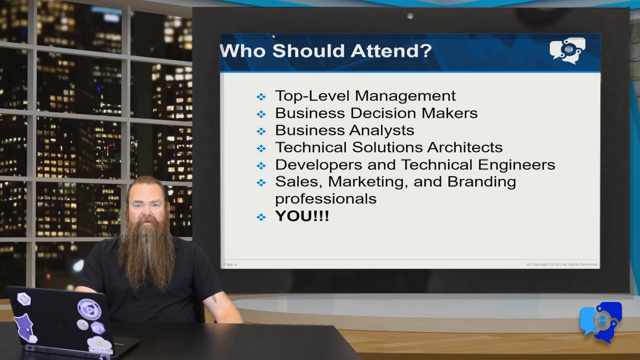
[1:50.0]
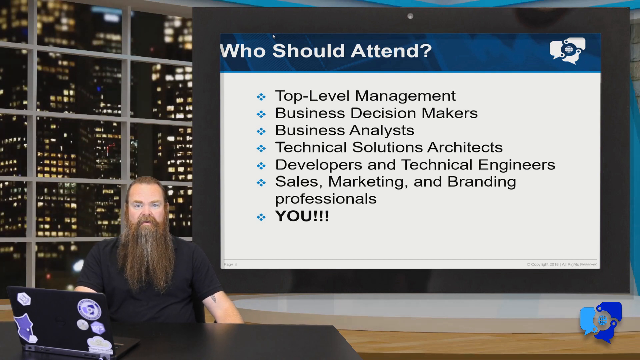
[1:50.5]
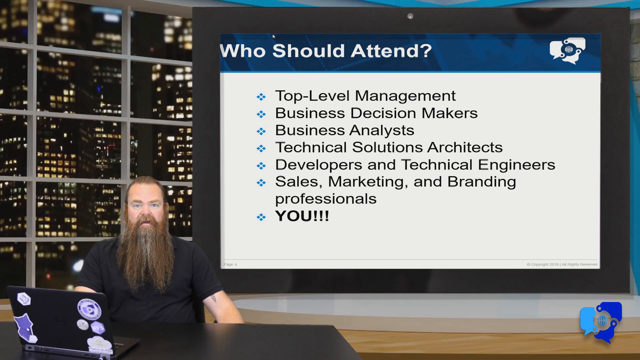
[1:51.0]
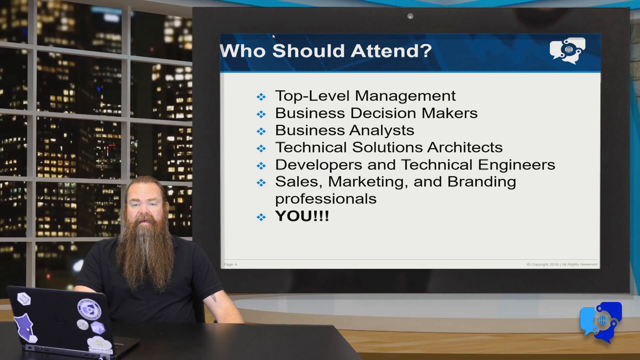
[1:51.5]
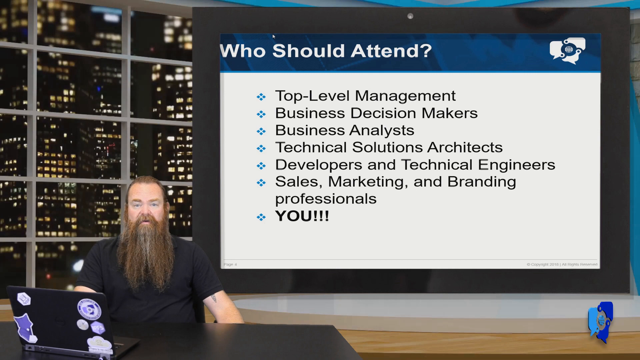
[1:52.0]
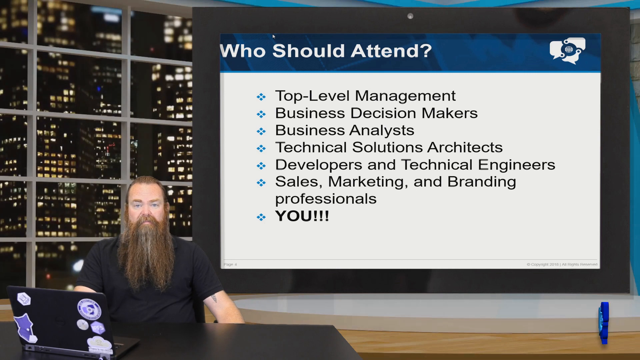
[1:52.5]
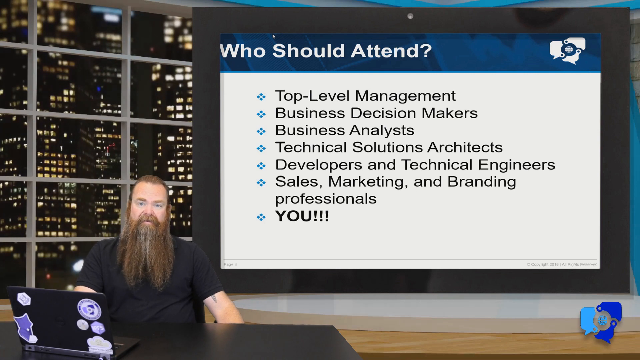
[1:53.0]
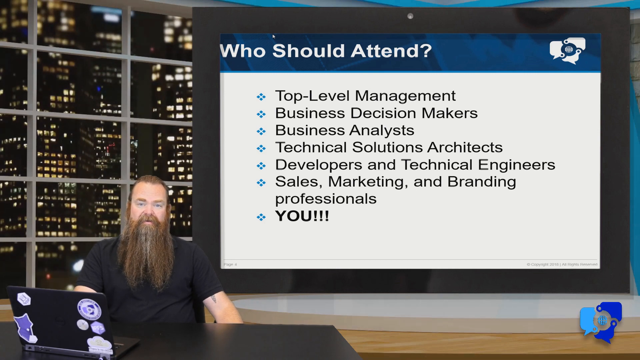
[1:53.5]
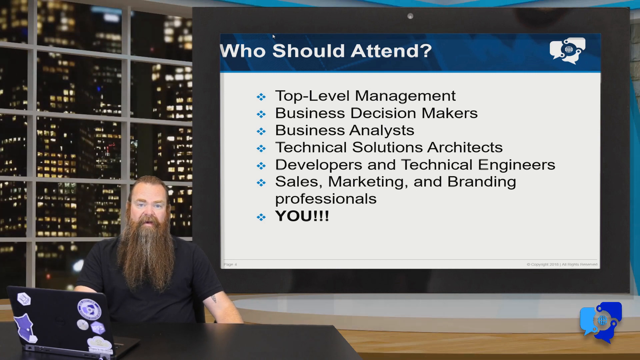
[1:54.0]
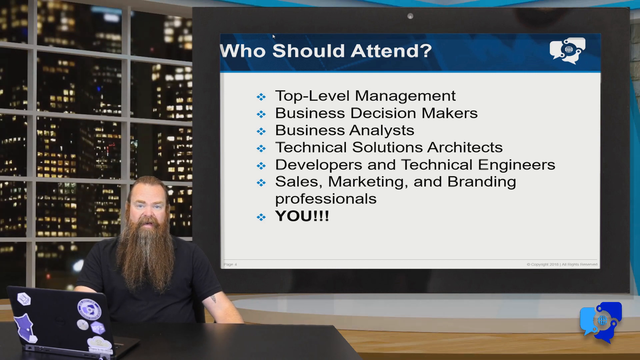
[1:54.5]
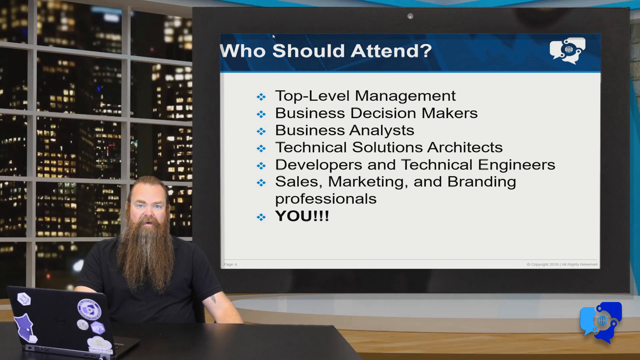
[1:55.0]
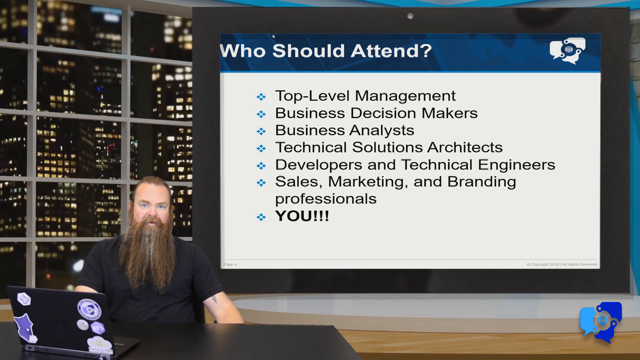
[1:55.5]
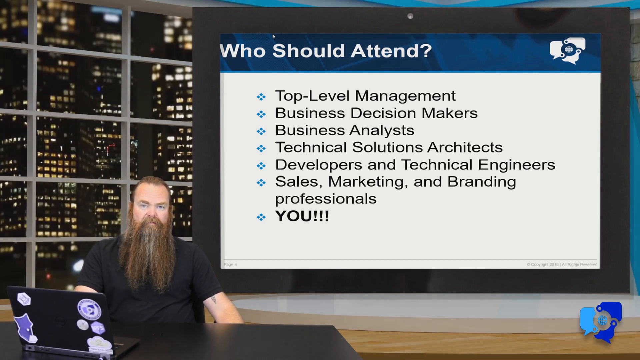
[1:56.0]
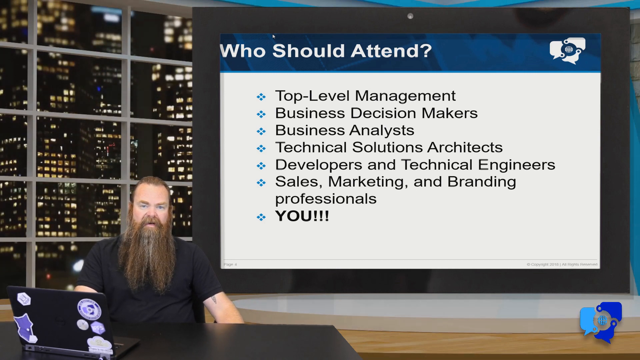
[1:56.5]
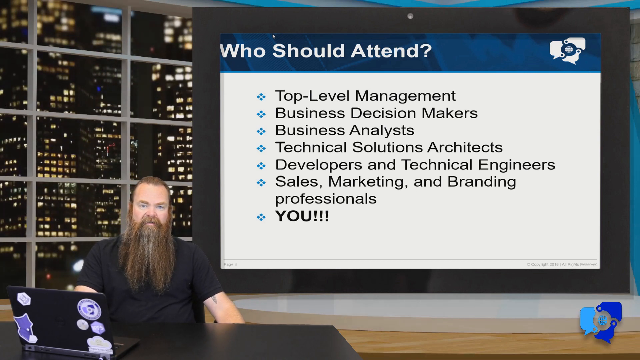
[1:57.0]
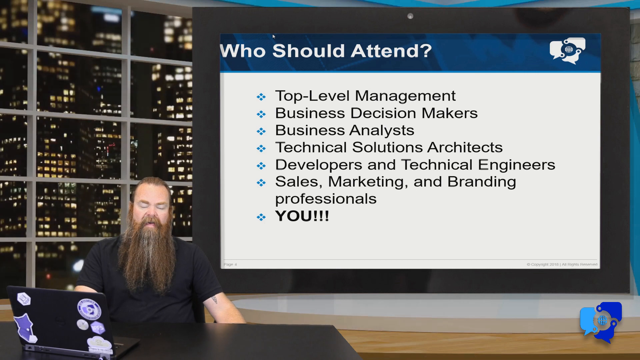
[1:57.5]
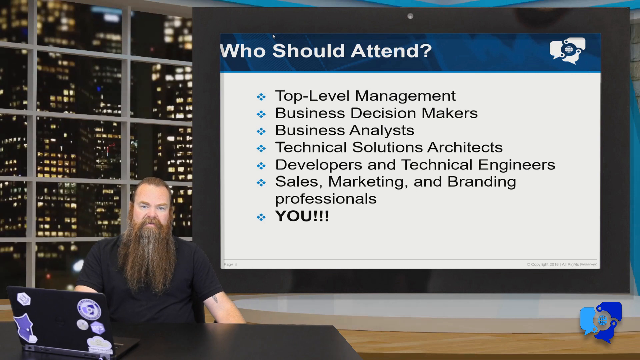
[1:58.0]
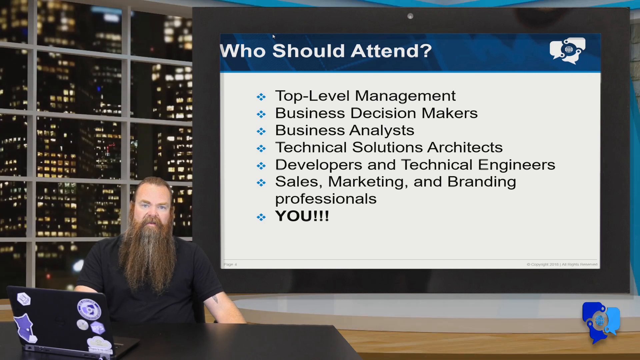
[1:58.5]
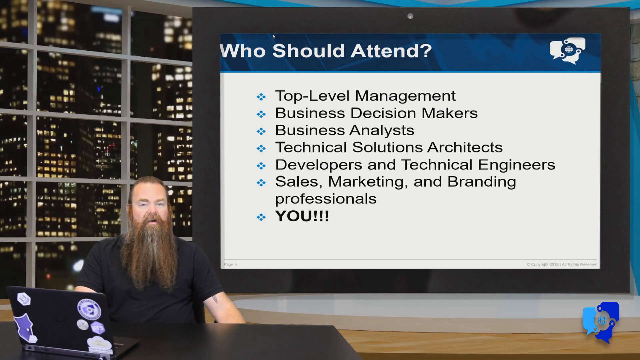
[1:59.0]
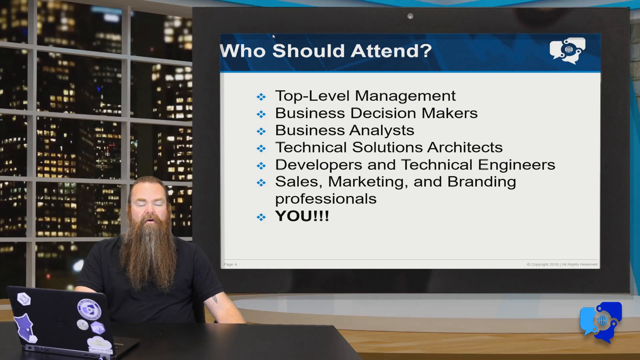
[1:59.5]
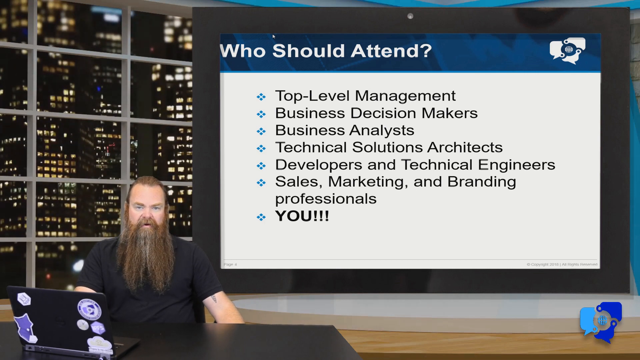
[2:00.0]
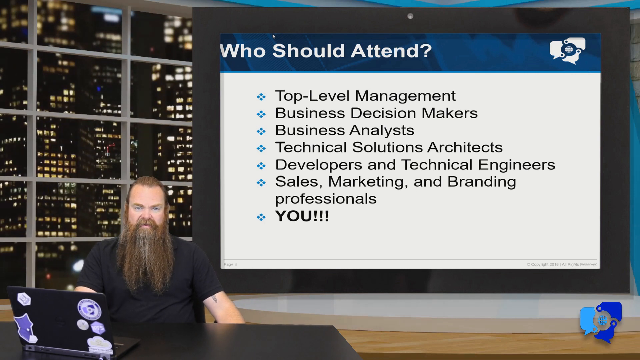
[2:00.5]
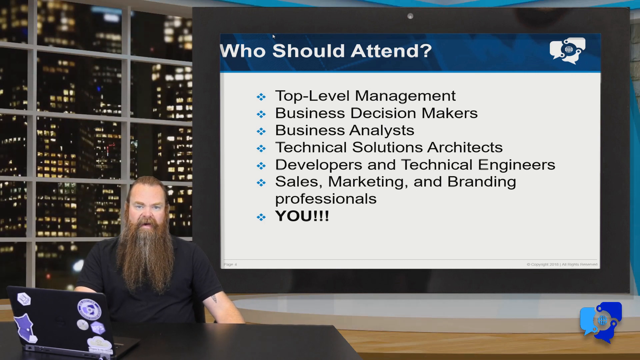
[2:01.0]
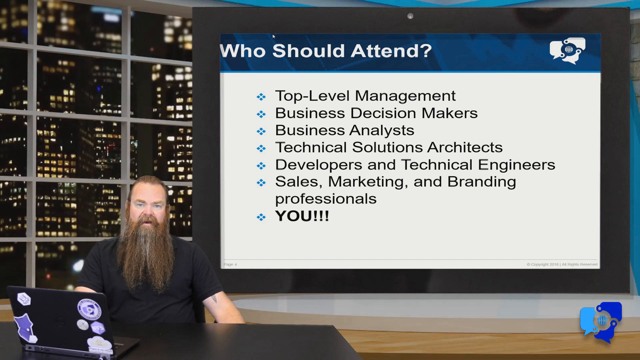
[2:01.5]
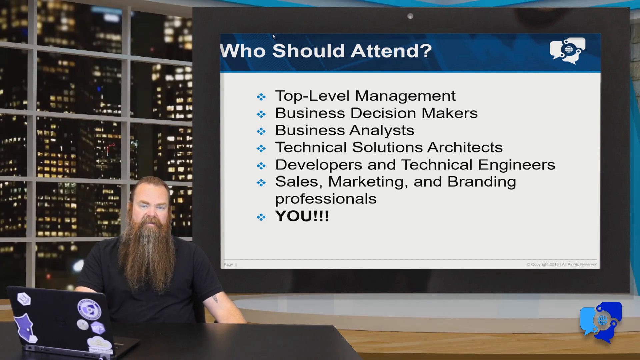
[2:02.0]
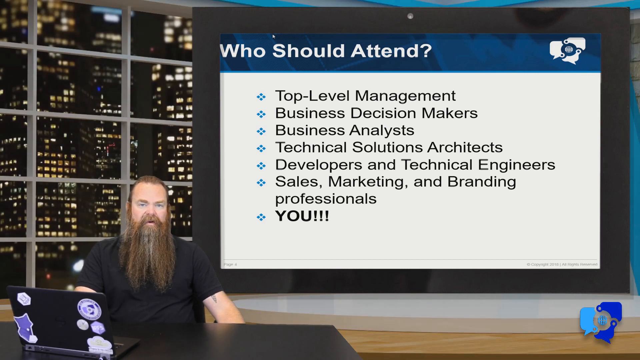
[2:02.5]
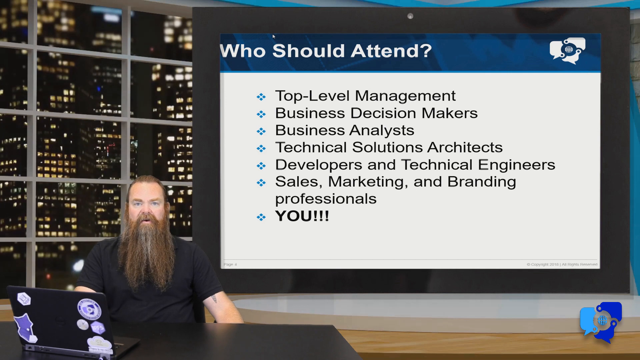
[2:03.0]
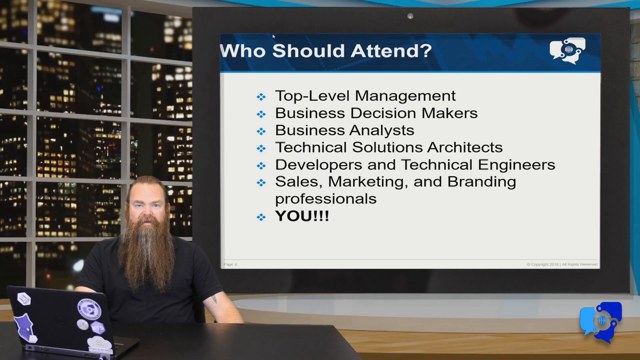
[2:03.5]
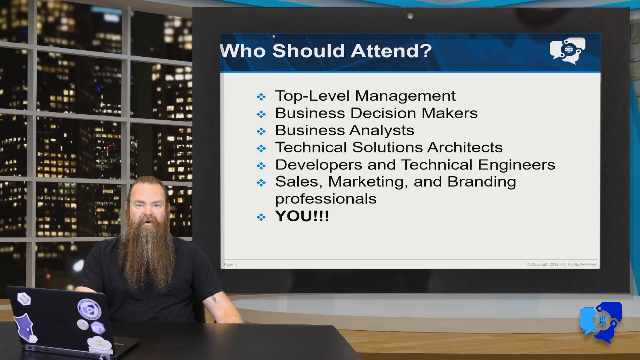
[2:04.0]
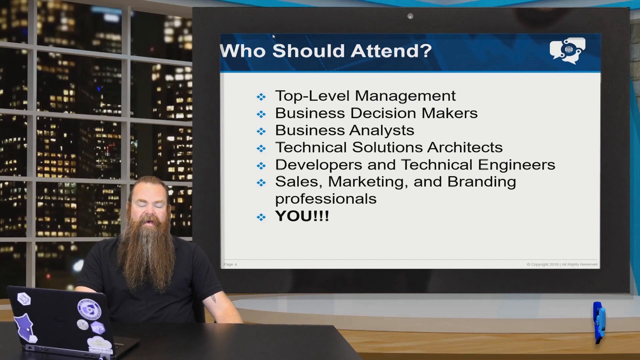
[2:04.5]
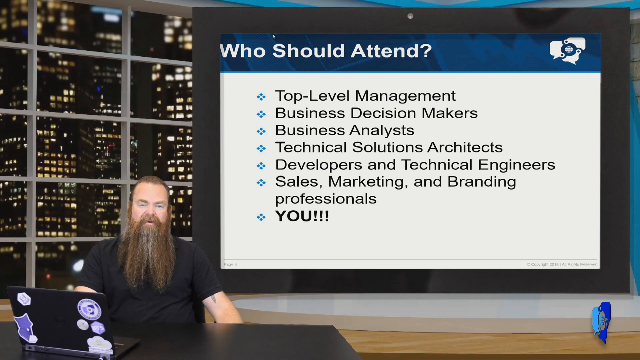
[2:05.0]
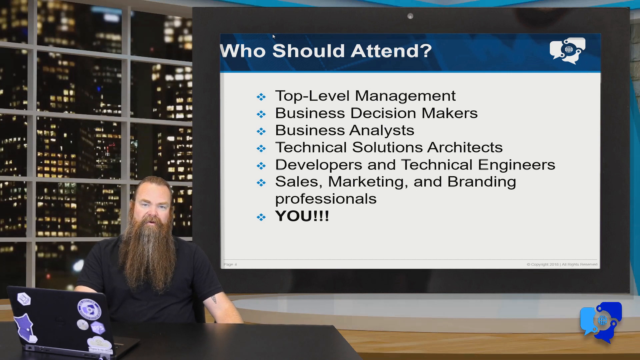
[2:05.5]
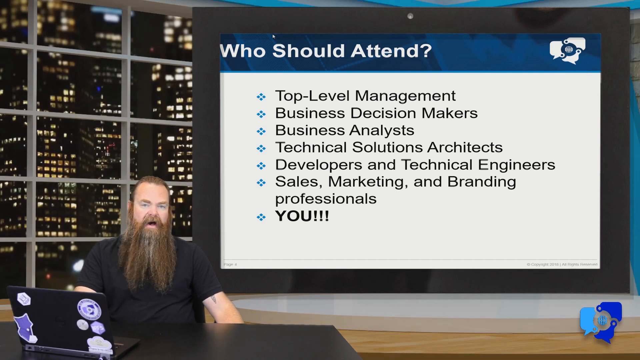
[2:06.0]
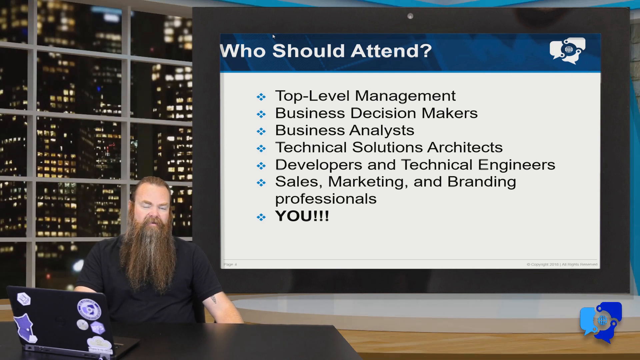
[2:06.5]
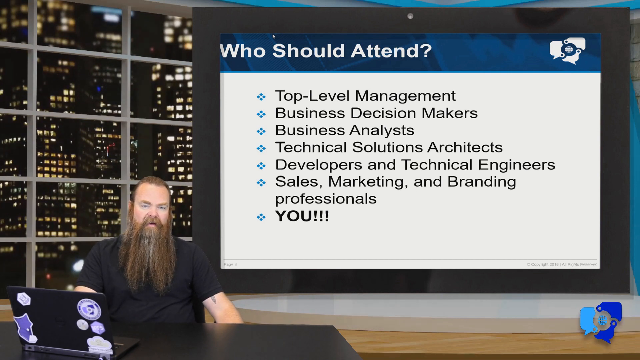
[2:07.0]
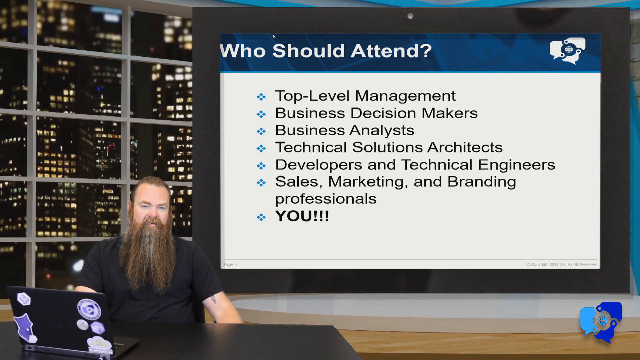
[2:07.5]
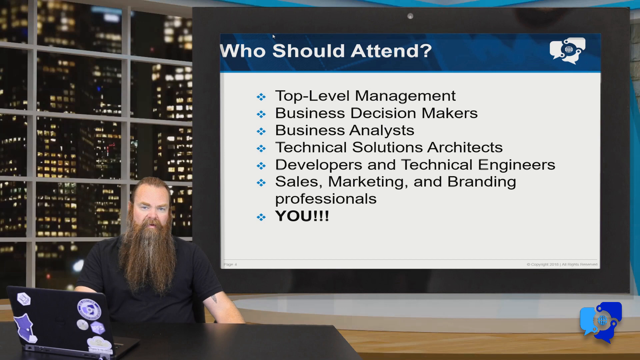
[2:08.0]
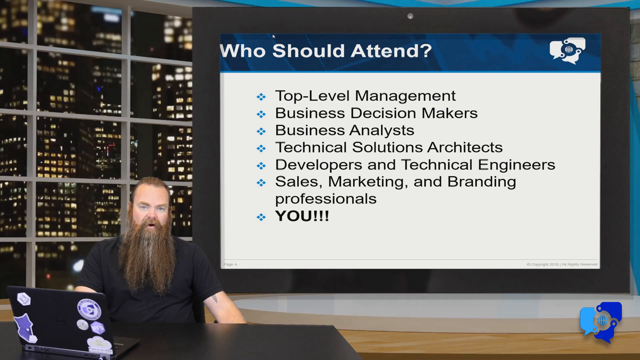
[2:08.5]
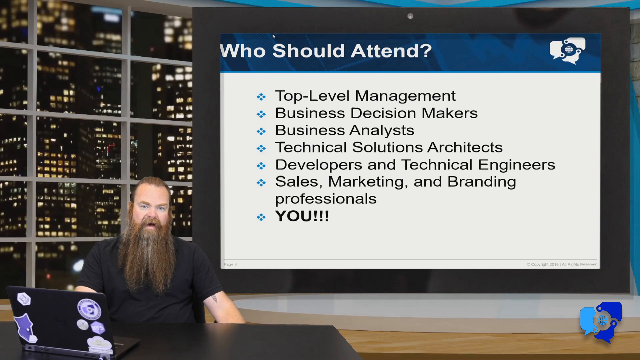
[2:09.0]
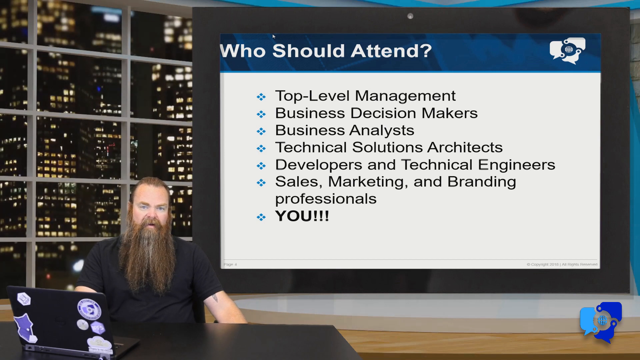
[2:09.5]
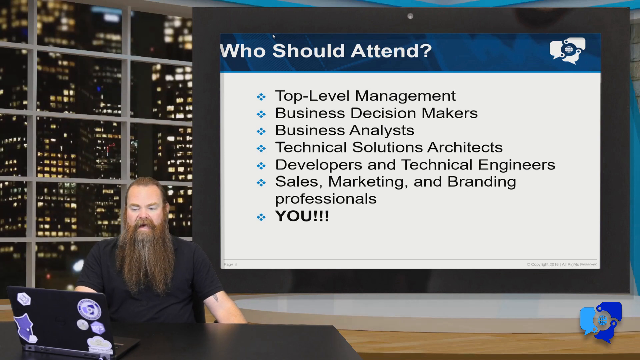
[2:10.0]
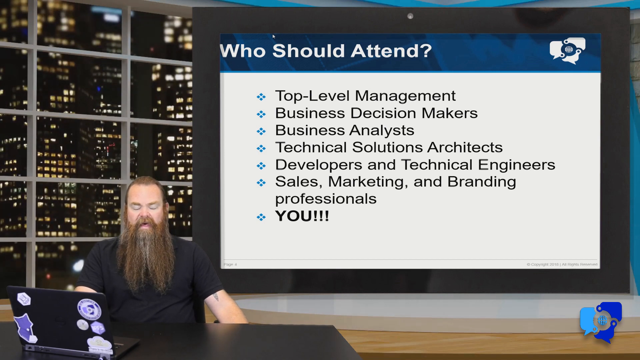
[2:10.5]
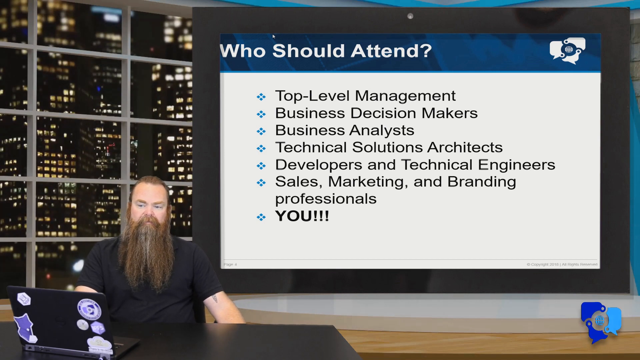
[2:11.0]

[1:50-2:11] On the right-hand side of the screen, a message reads "who should attend" with a question mark at the top, and beside it a small icon of three ducks, seals or something similar spinning around a planet. Underneath, in white, the answer reads "top level management, business decision makers, business analysts, technical solutions, architects, developers, and technical engineers, sales, marketing, and branding professionals, and also you", with three exclamation points beside "you". On the left side of the screen is a backdrop of an open-window view out at skyscrapers, at least three of them, behind the instructor, who is sitting in front of a laptop. He wears a black short-sleeved t-shirt and has a long beard, 10 to 12 inches long, coming down his chest; it is mostly red with a little white mixed in. His long hair is pulled back into a ponytail, and he looks to have a scar on his right arm, visible coming out of his sleeve.